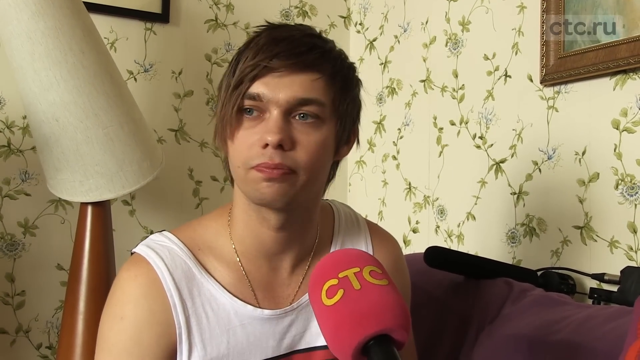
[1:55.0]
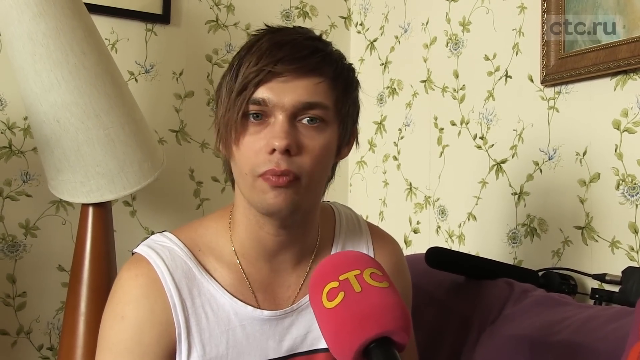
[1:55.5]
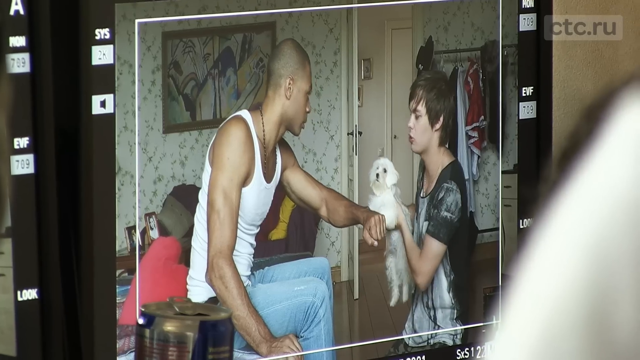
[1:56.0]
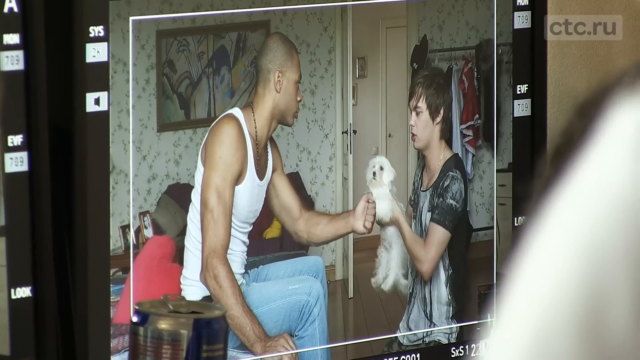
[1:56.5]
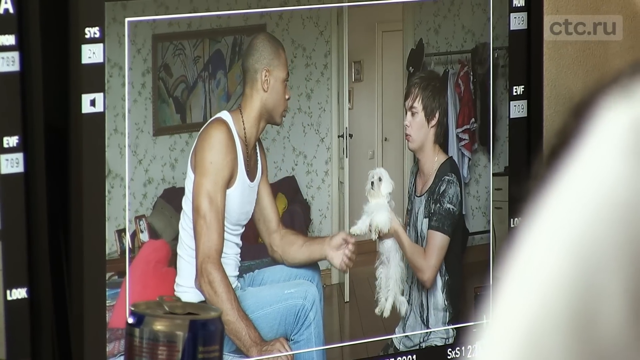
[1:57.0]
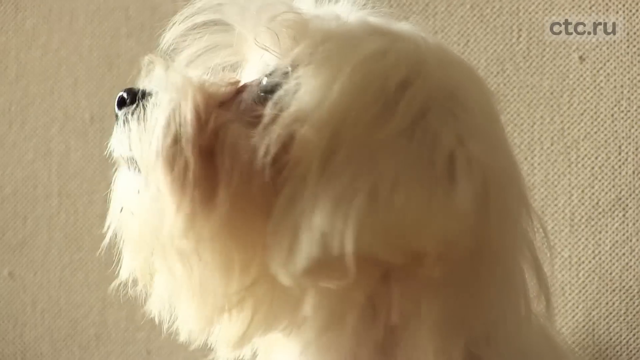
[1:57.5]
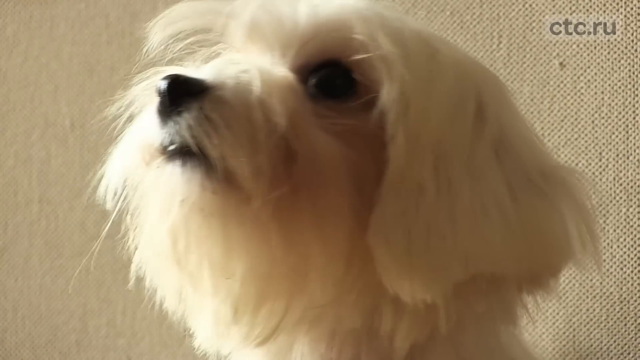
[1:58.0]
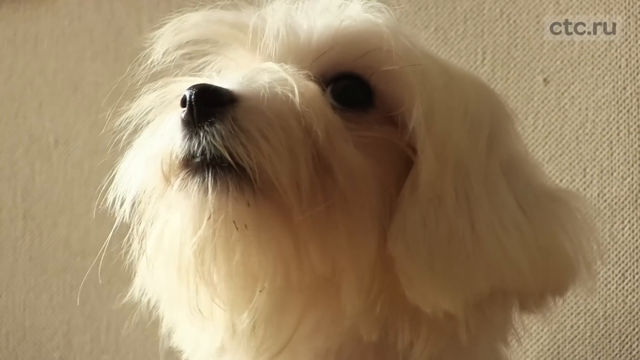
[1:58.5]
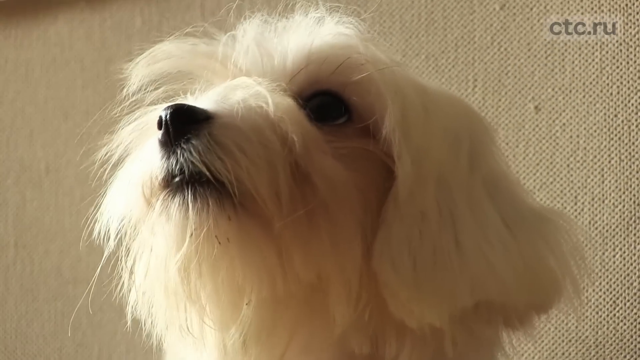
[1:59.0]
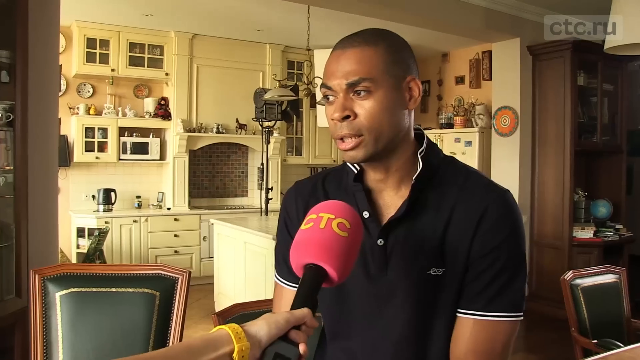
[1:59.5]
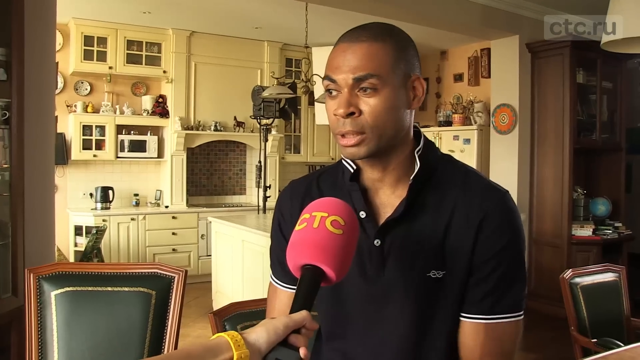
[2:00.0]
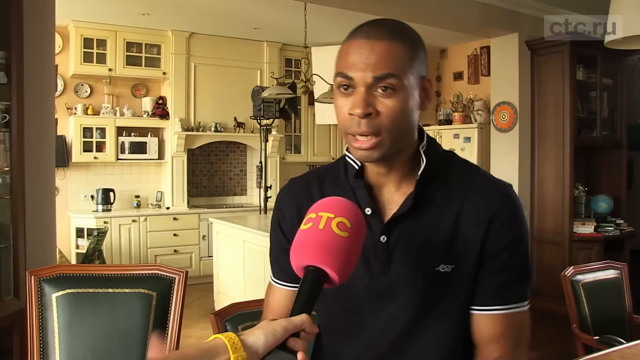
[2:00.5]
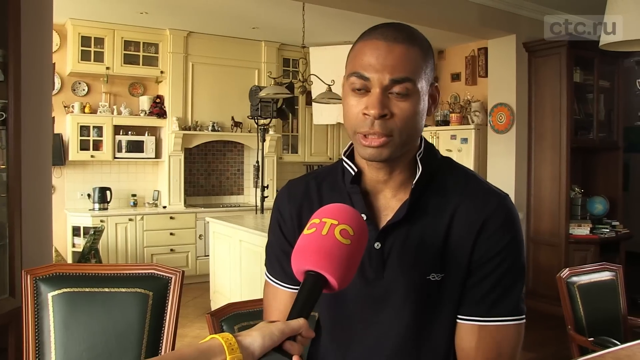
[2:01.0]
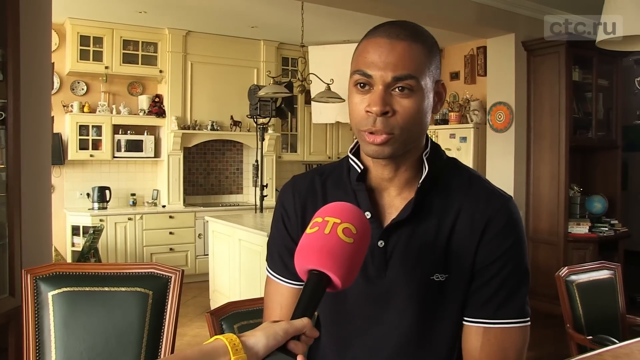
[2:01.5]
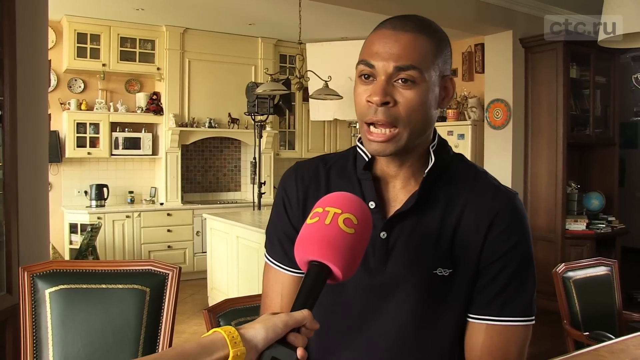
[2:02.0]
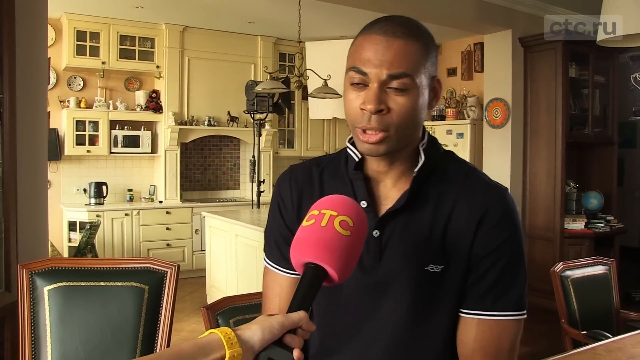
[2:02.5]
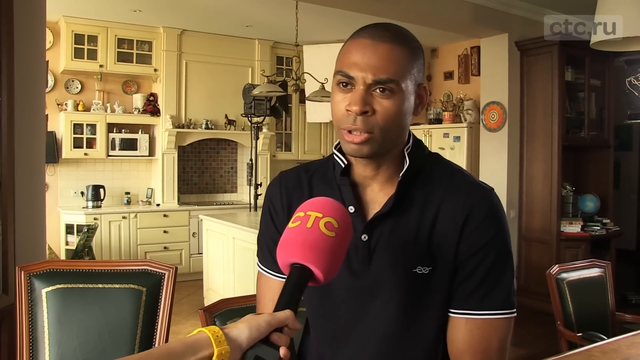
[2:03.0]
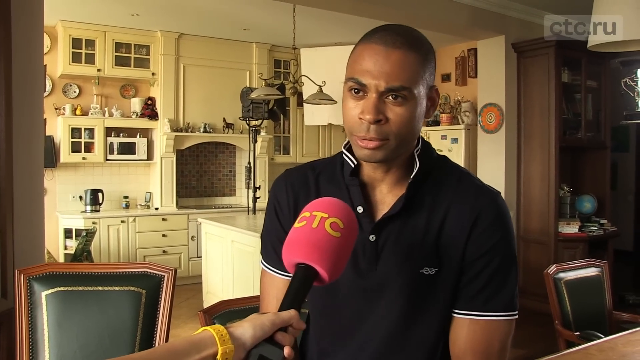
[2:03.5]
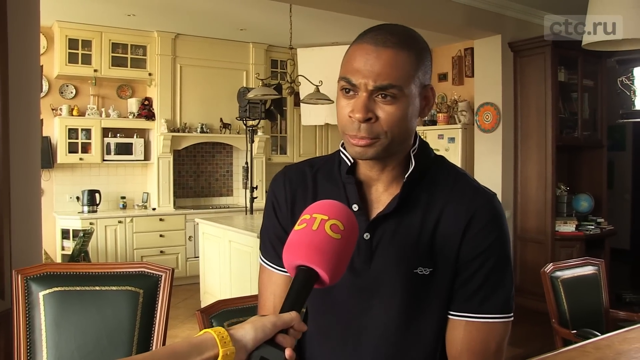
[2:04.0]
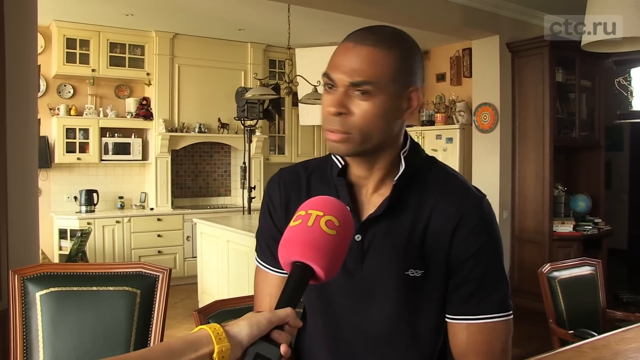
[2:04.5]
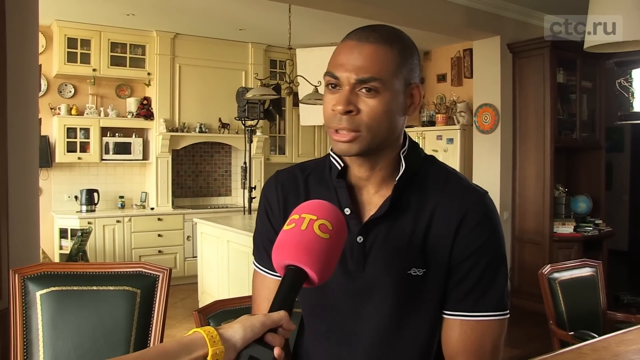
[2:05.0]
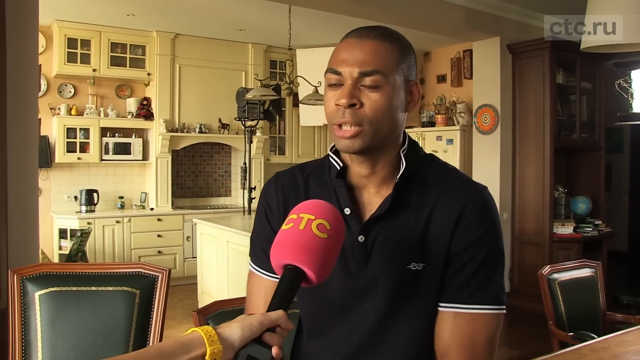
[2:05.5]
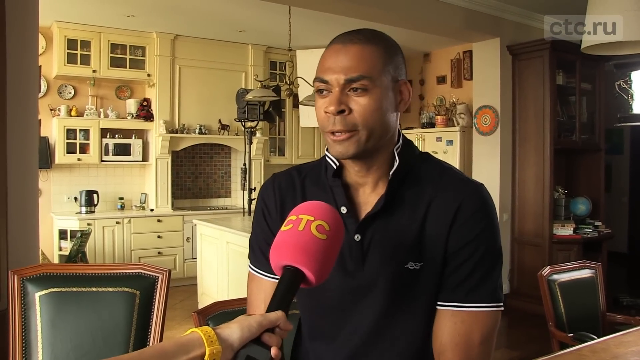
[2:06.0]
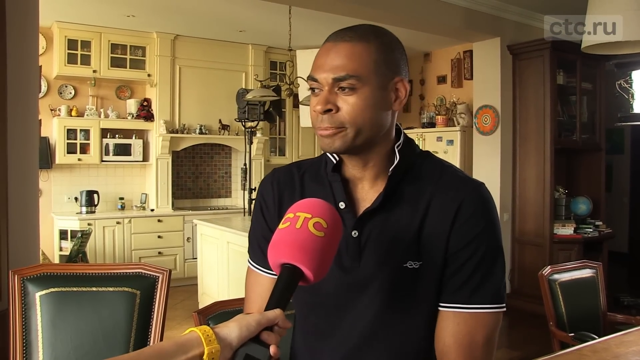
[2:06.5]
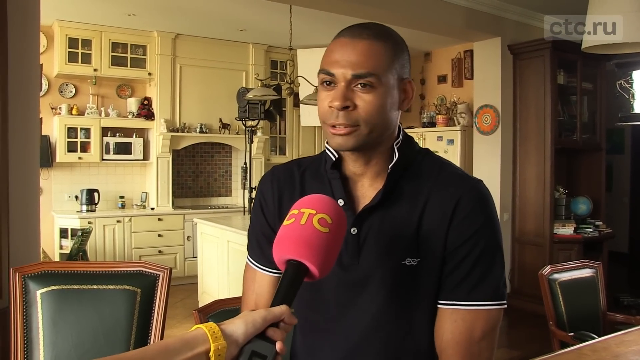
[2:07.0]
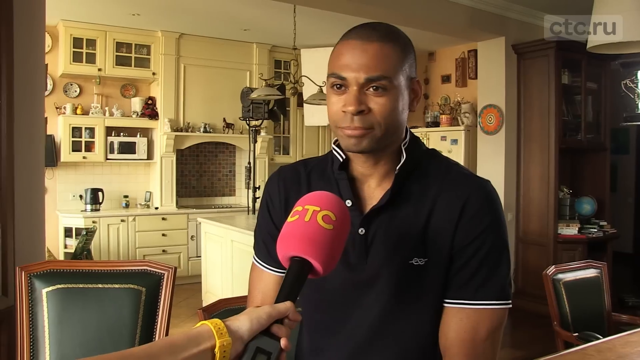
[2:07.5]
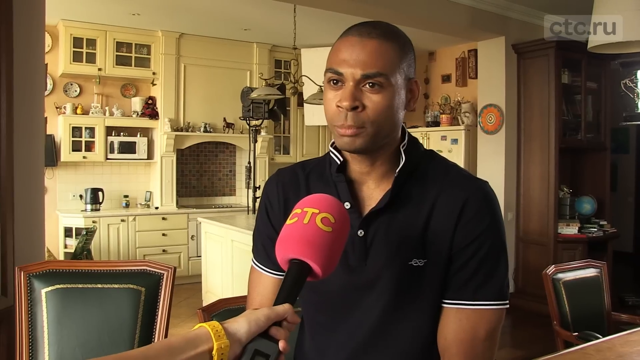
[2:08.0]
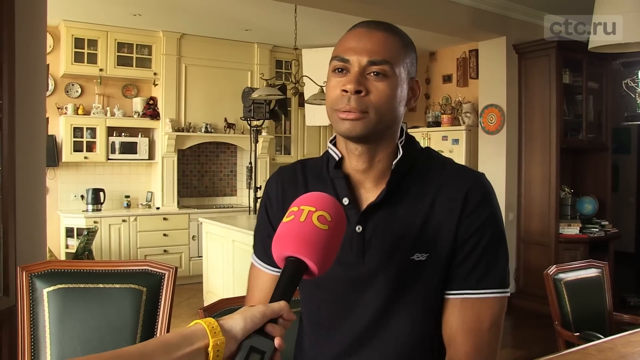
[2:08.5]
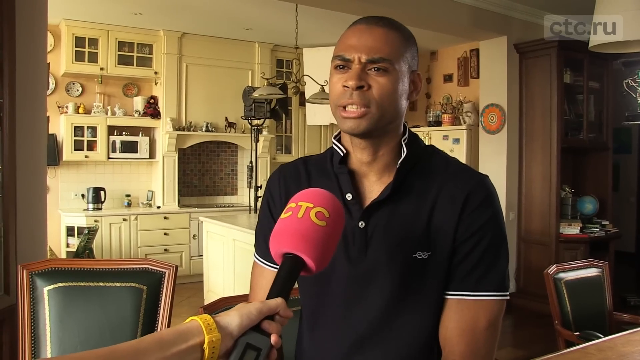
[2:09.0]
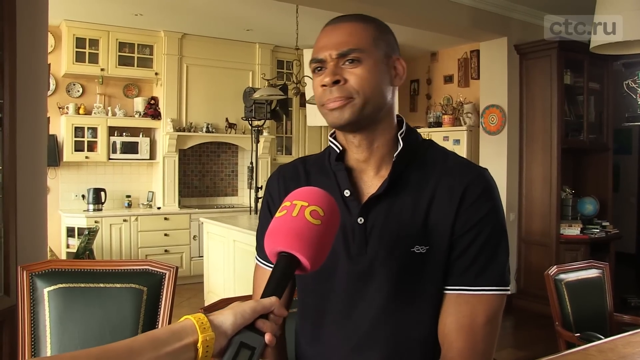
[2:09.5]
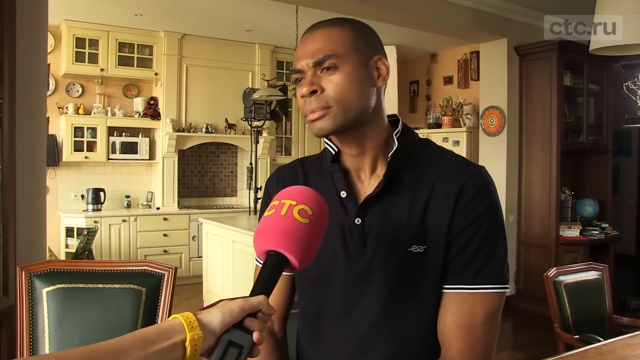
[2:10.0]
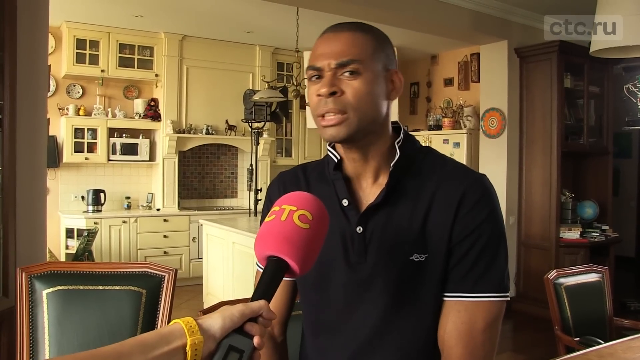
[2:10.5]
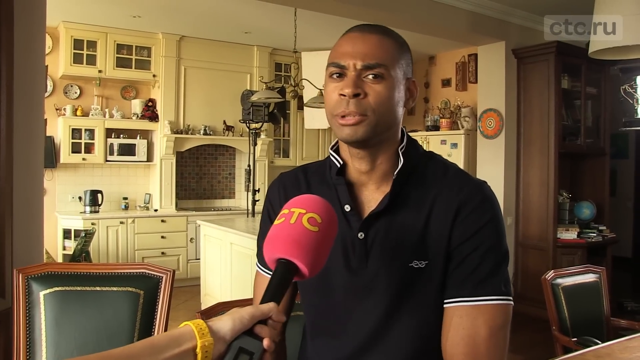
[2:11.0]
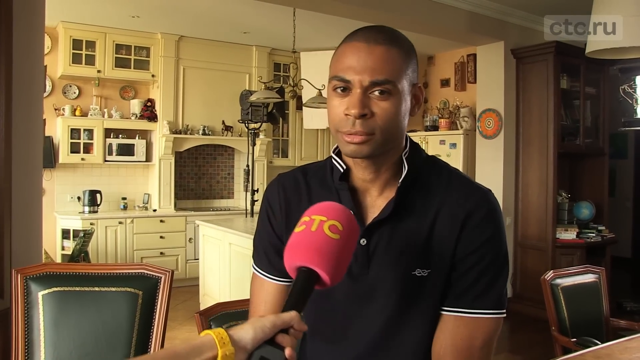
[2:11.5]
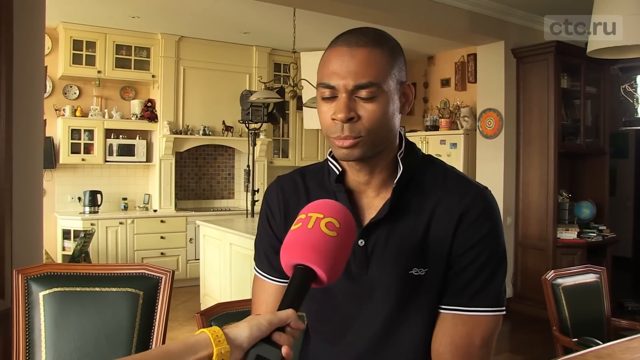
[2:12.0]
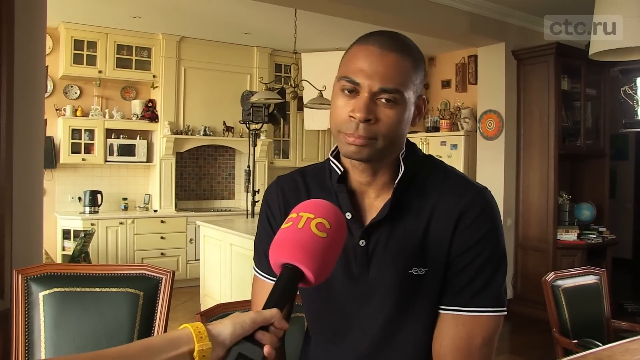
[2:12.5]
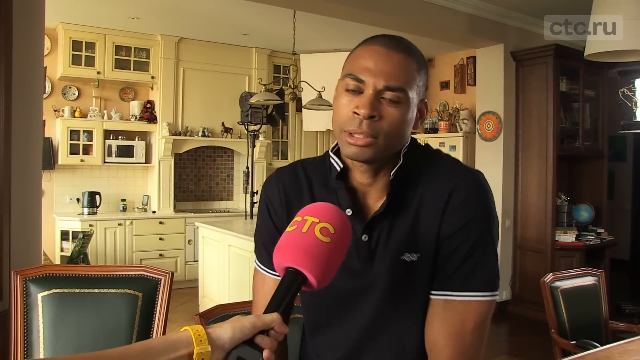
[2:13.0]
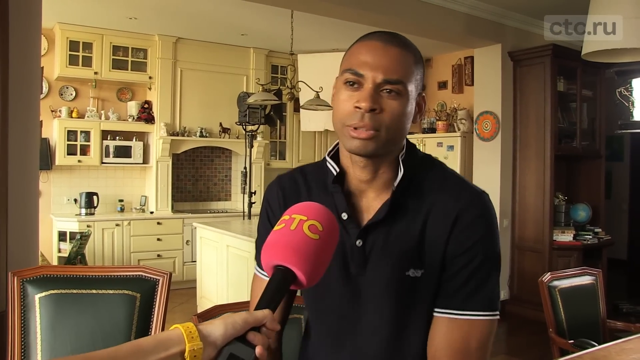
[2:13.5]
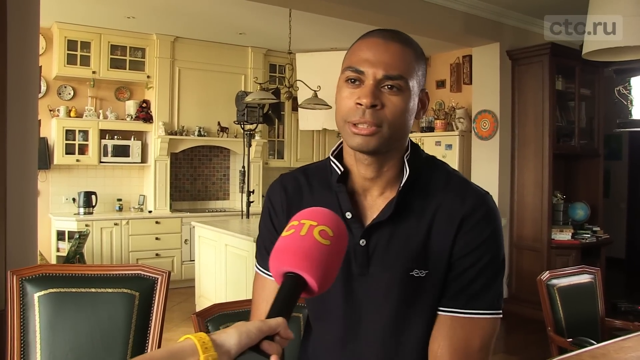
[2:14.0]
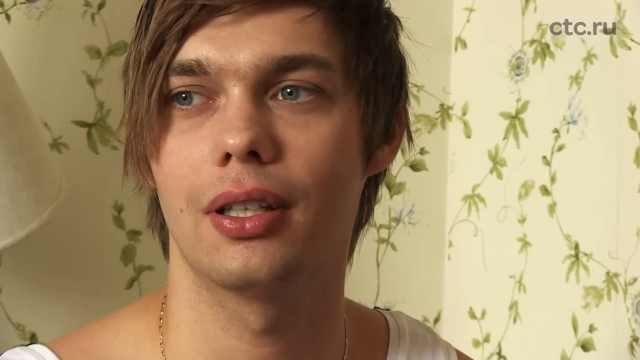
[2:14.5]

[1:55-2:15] A behind-the-scenes shot shows what the TV camera sees in the bedroom set: the white guy on the floor holding a dog, and the black guy sitting down, holding his arm out, apparently either having just been bitten or wanting to be bitten. The camera zooms into the dog for a close-up. Next comes an interview with the black actor in a black shirt in the kitchen set, with a CTC microphone, talking seriously about something with the kitchen set behind him. The video then flashes to the white actor being interviewed, apparently sitting on that couch.